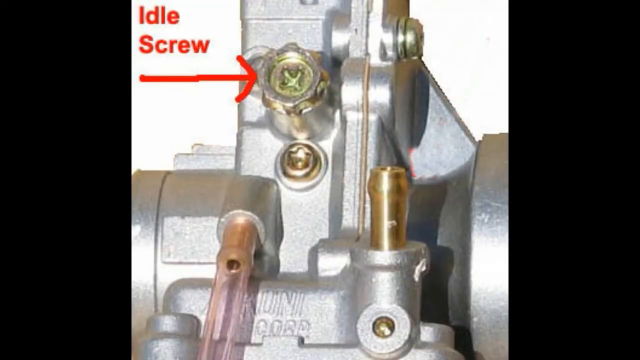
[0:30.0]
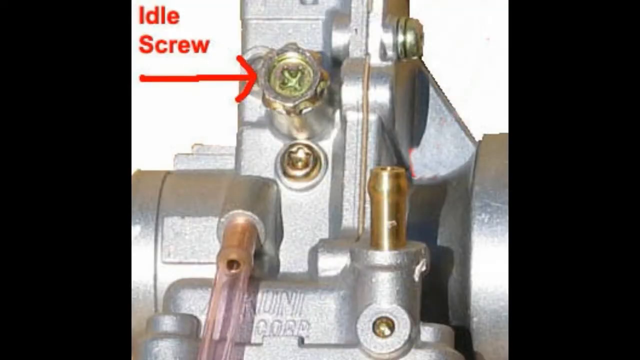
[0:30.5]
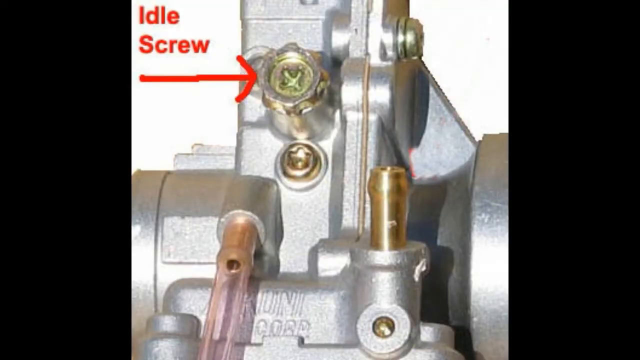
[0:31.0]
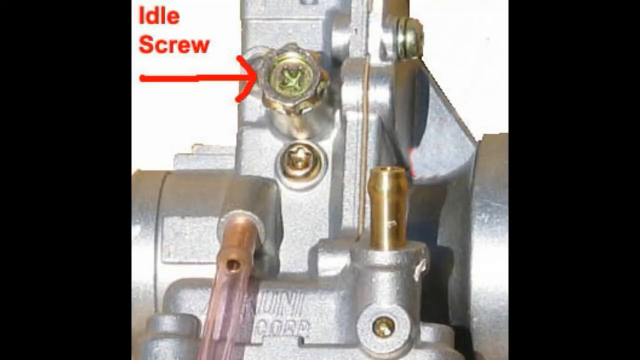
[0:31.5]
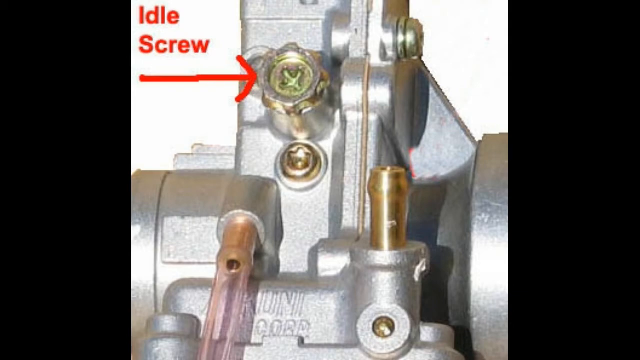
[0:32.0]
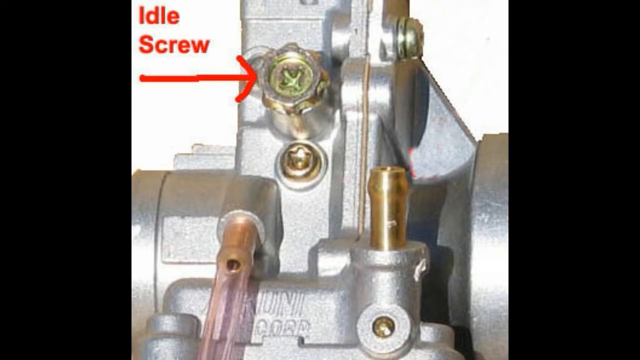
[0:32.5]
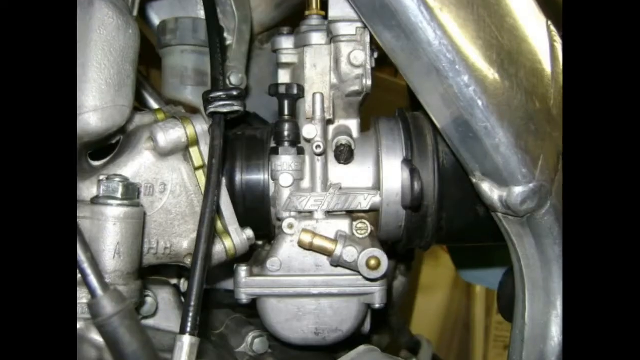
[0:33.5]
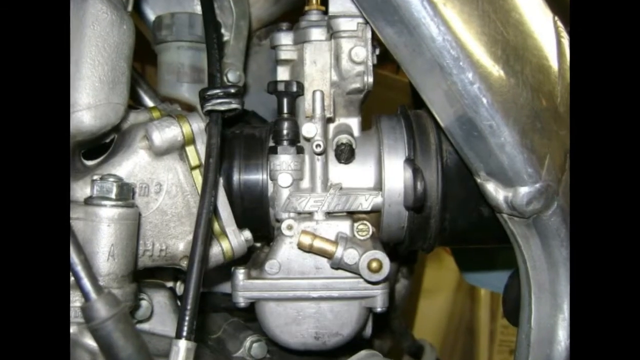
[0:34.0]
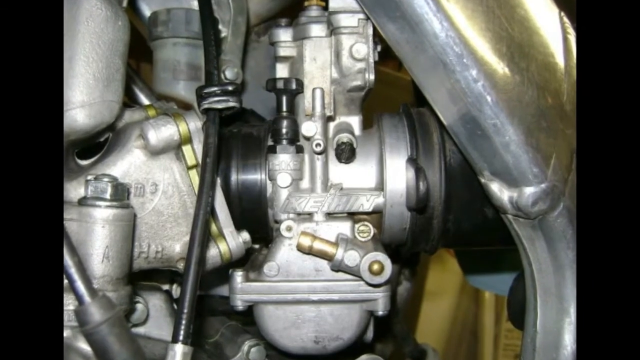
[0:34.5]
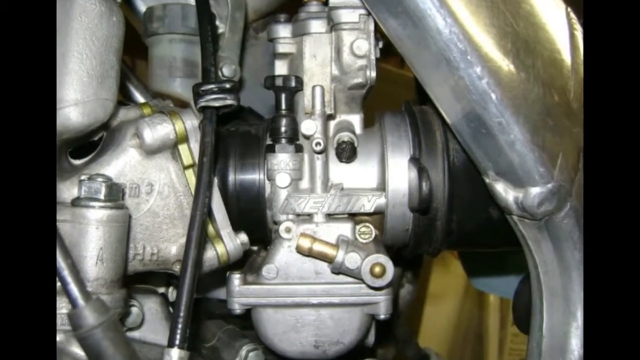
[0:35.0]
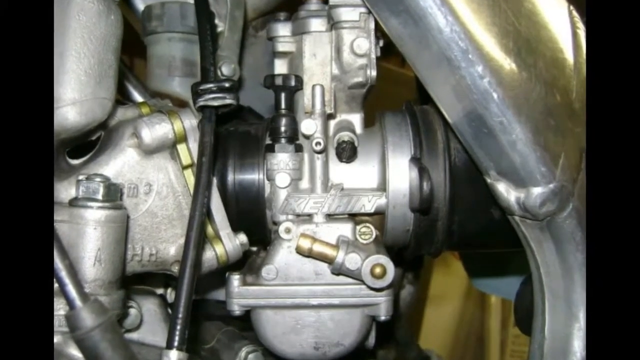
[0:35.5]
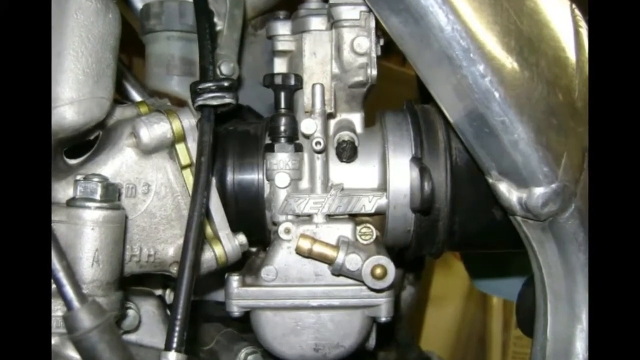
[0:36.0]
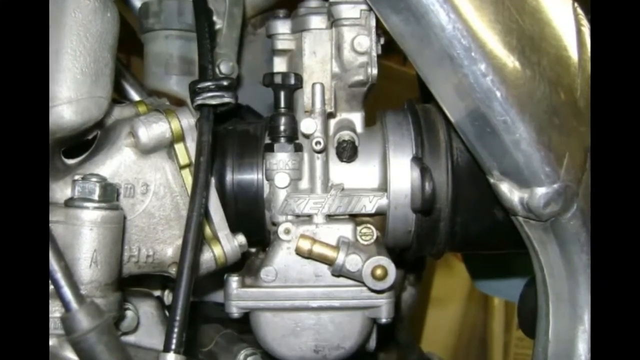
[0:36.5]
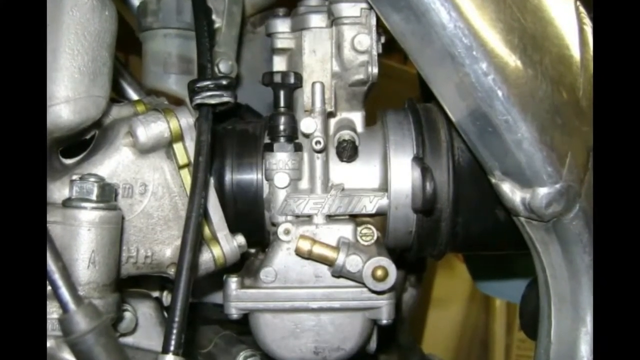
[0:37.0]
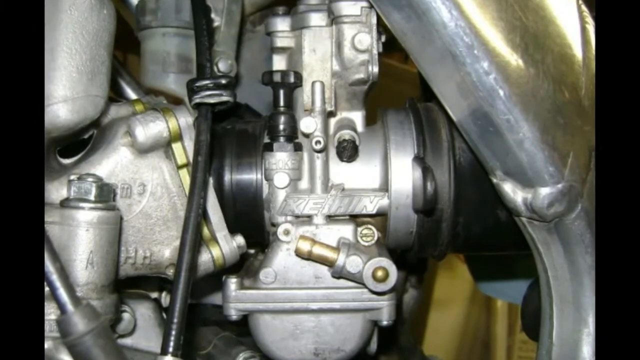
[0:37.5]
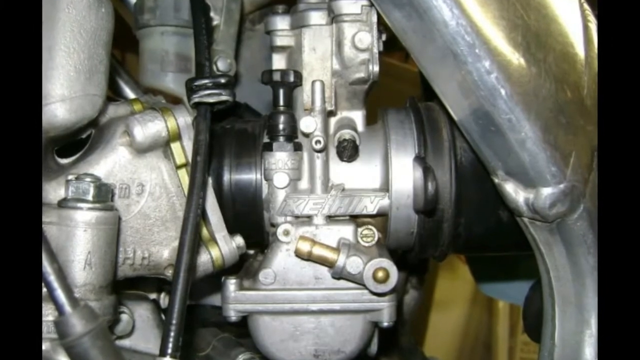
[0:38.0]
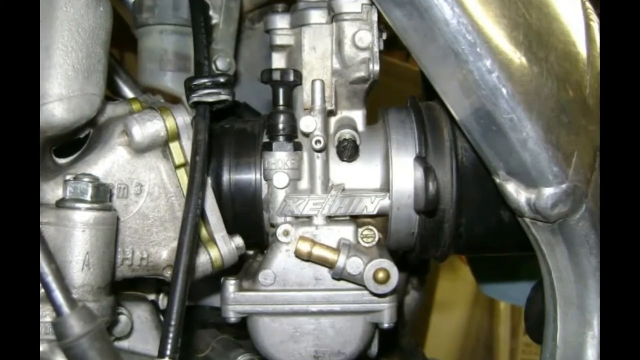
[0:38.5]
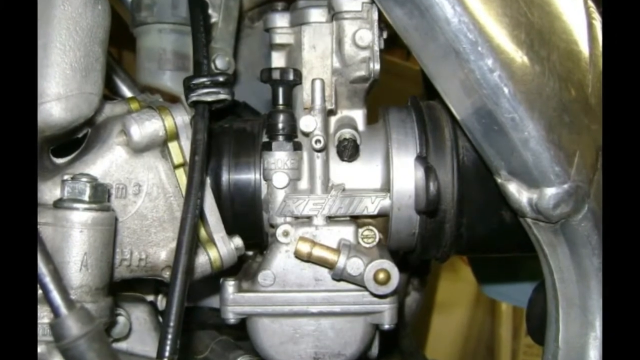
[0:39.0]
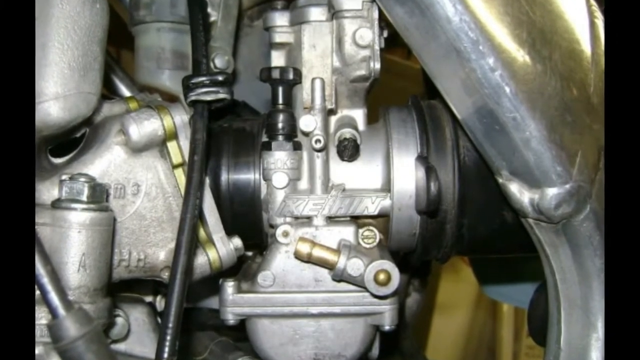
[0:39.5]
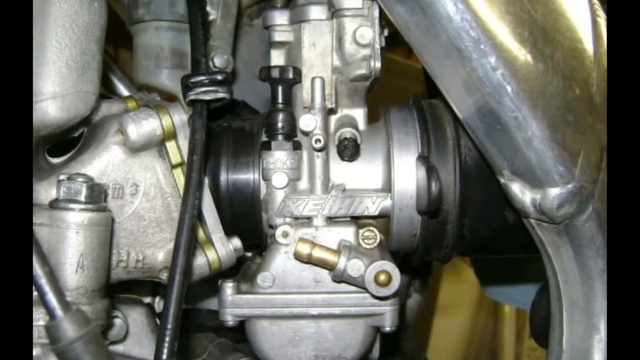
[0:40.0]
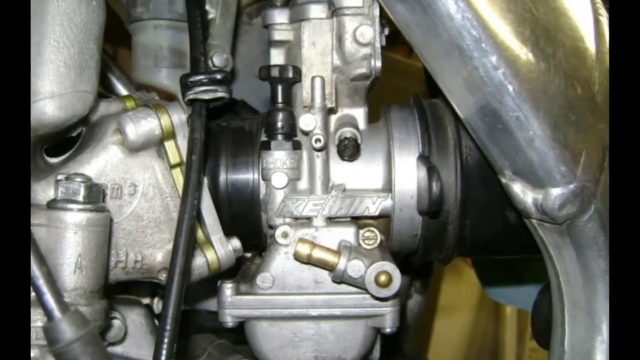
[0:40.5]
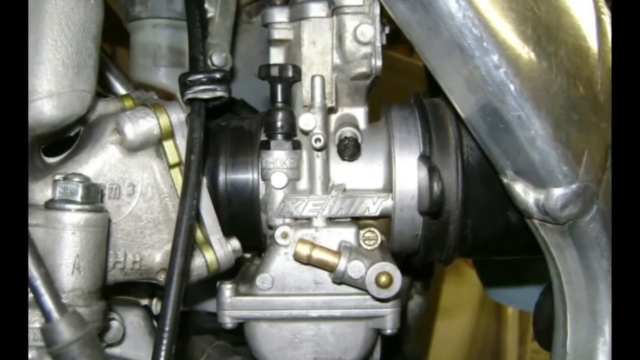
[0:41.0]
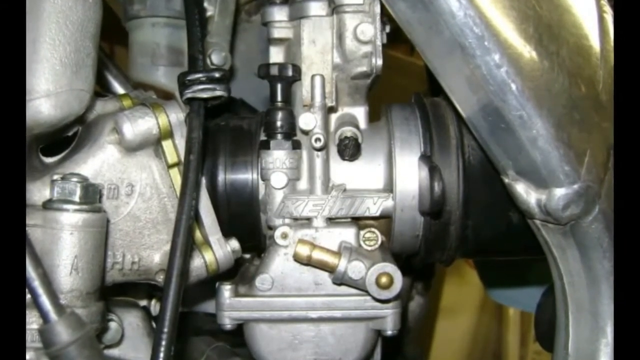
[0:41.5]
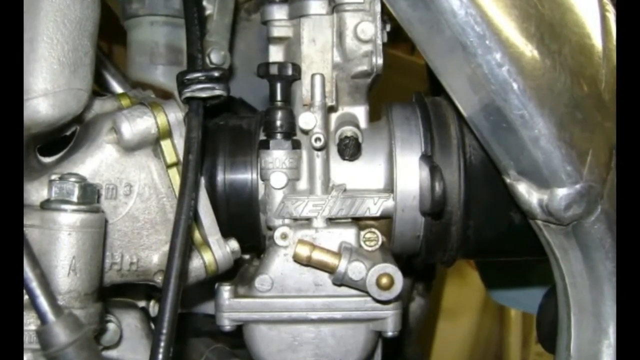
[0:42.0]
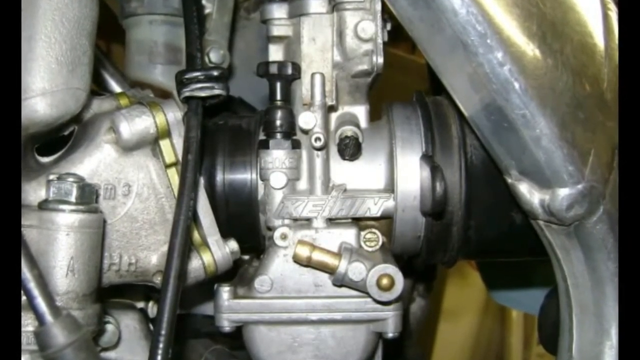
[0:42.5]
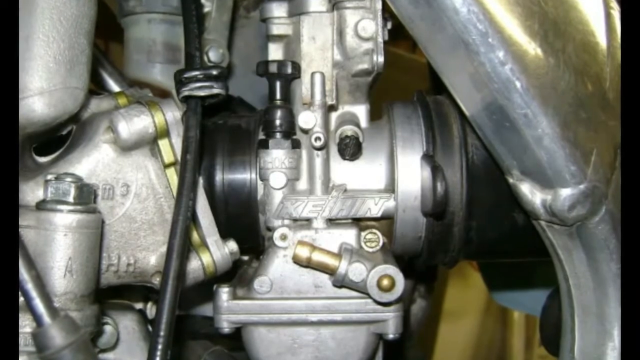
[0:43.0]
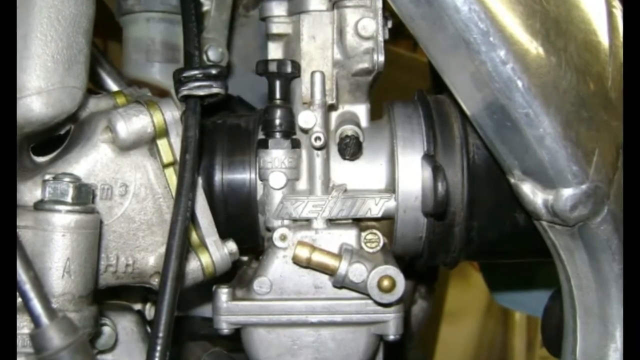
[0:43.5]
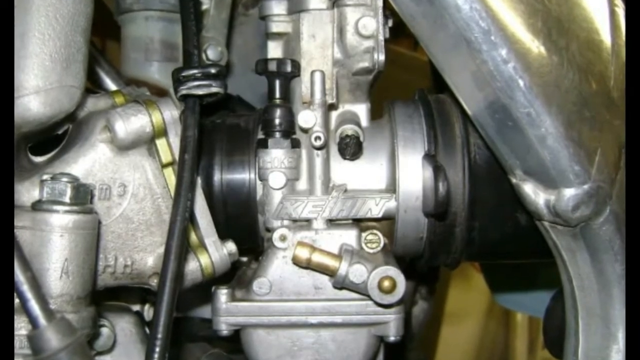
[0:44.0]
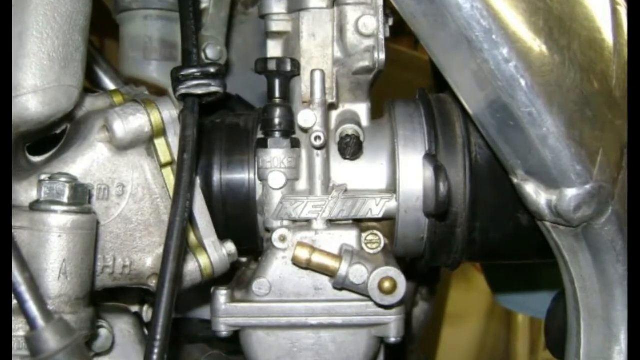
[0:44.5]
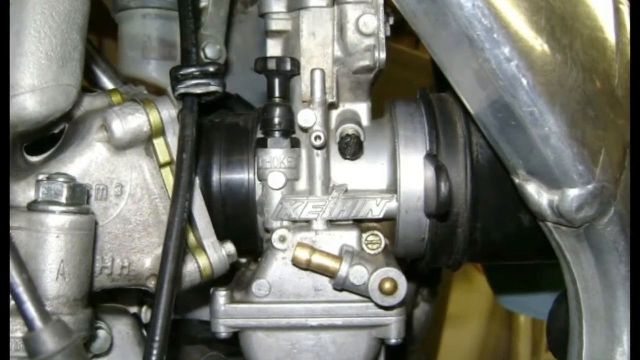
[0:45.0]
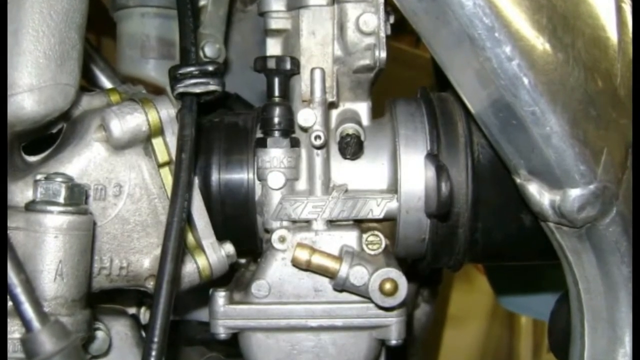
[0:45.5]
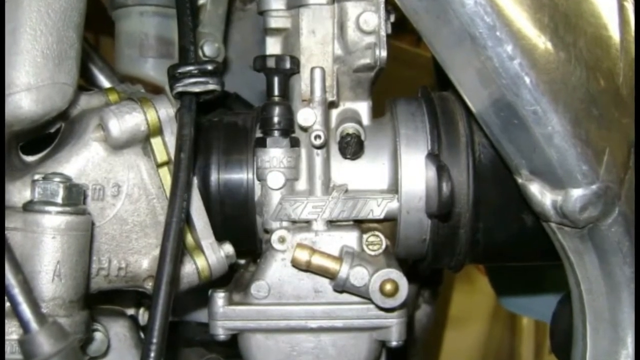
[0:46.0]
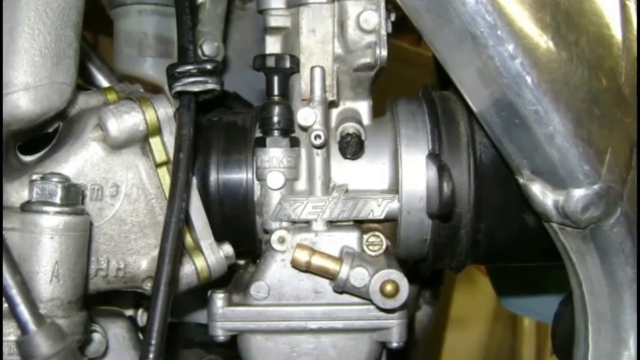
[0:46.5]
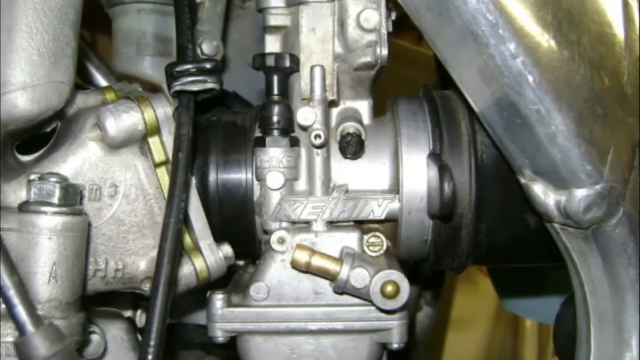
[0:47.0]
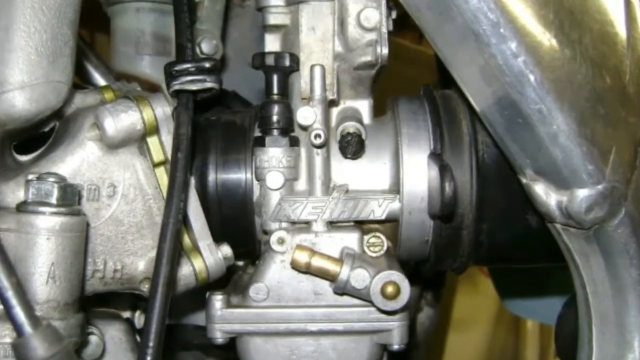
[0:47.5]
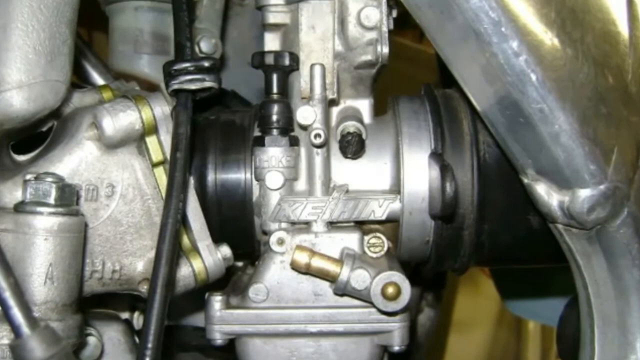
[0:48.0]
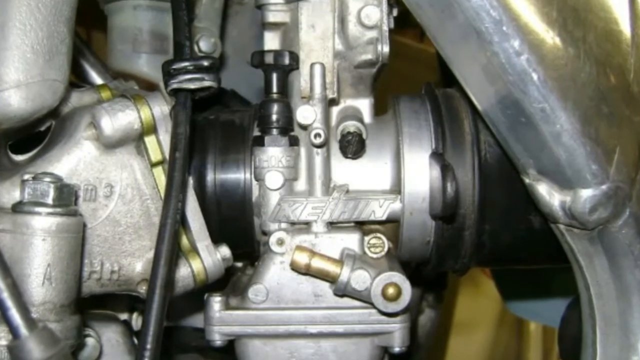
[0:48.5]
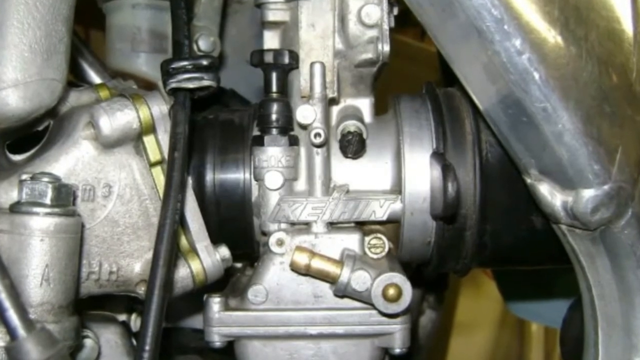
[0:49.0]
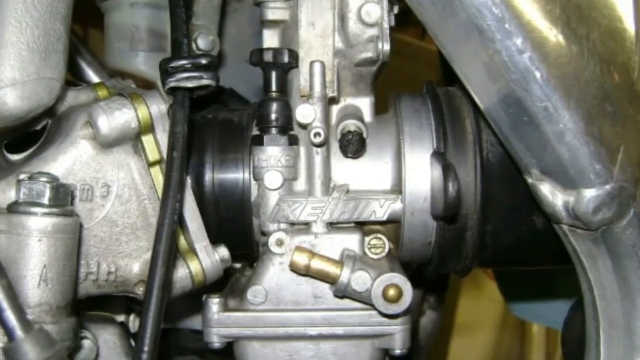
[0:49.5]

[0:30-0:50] A close-up shows the idle screw, followed by more close-ups of car parts from the same mechanism. The parts look a little rusted, though they mostly look new, with some shine on some of them. The camera slowly zooms in on them and returns to the idle screw, which looks sturdy. Among the other parts are some gold and copper, different linings and small mechanisms. Most of the shot is a slow zoom in on the inside of the mechanism.